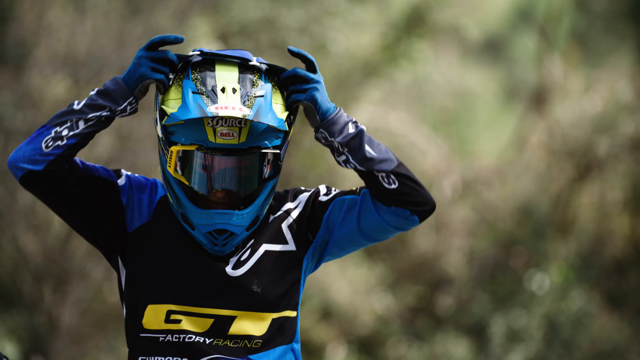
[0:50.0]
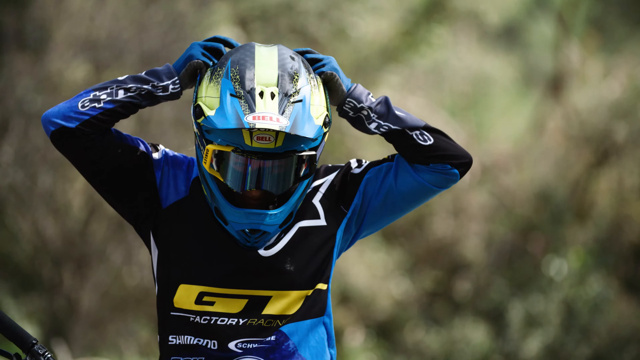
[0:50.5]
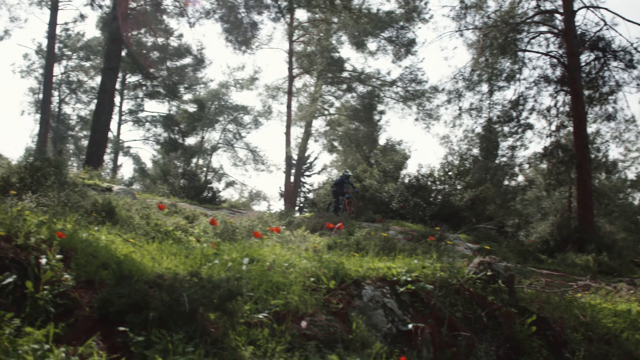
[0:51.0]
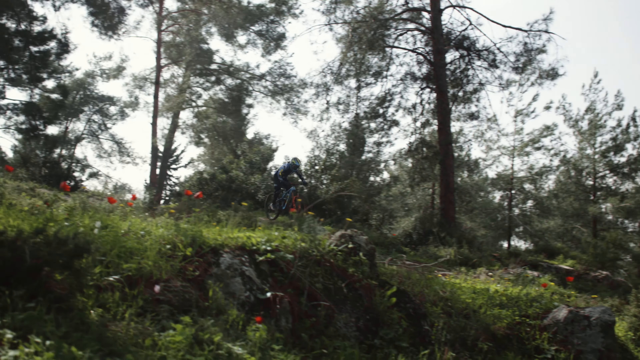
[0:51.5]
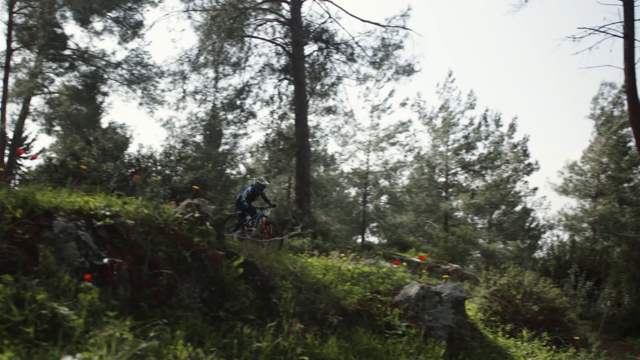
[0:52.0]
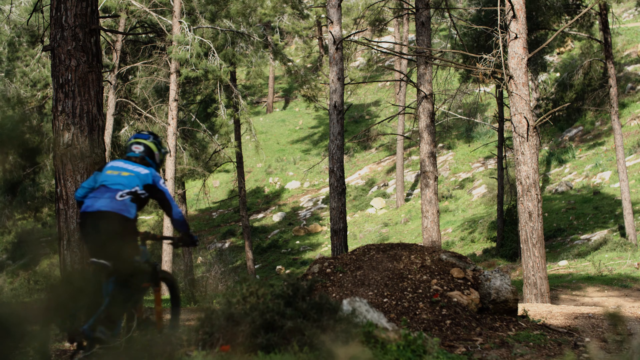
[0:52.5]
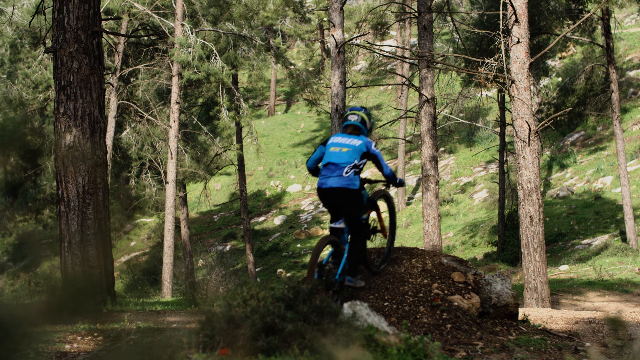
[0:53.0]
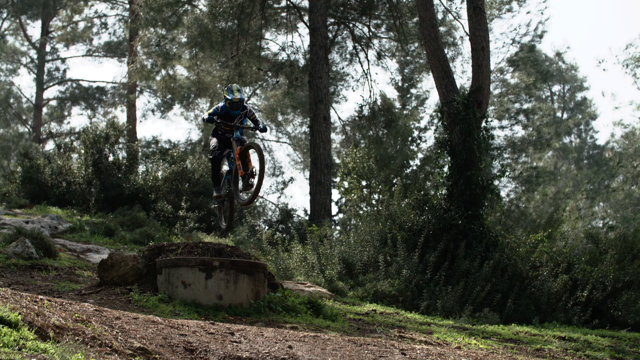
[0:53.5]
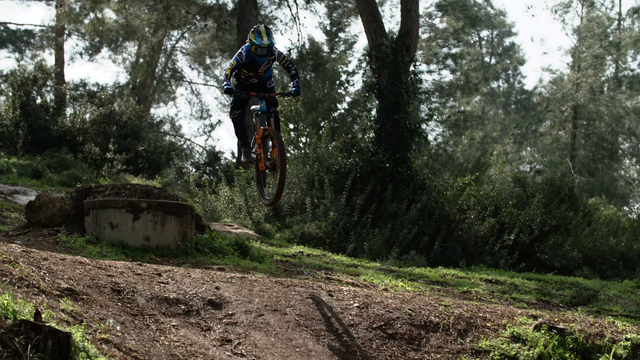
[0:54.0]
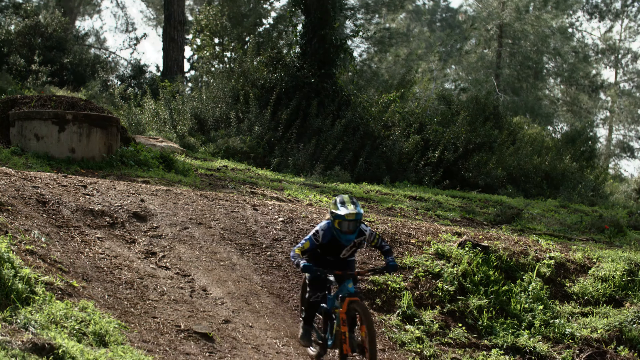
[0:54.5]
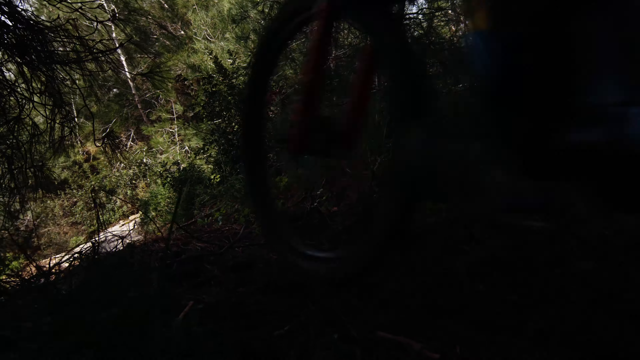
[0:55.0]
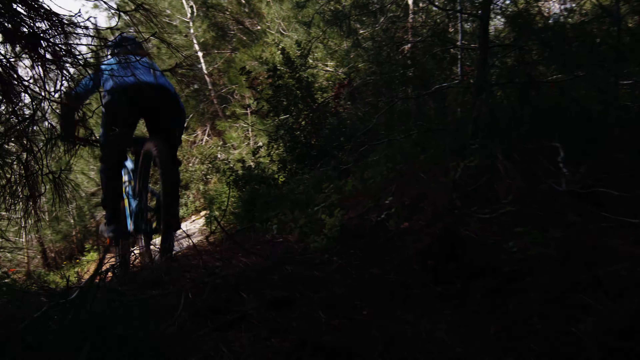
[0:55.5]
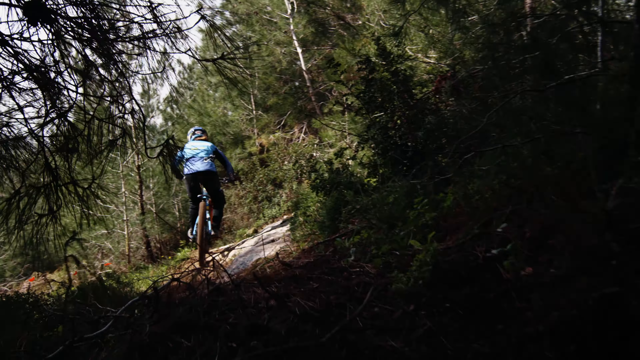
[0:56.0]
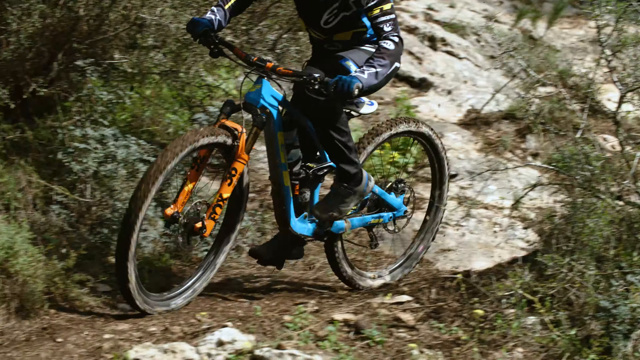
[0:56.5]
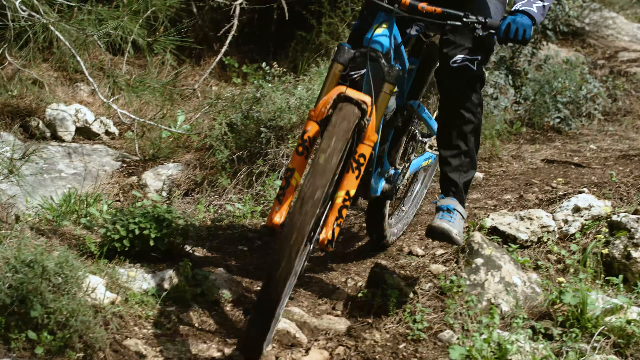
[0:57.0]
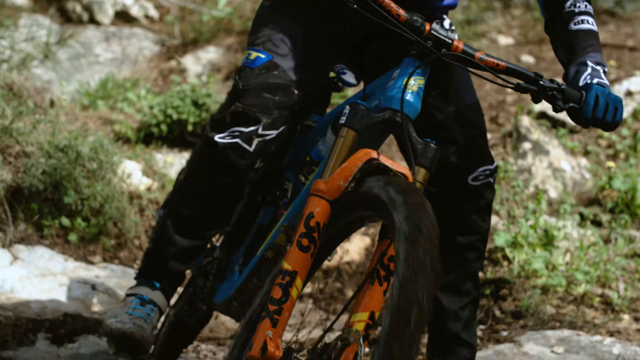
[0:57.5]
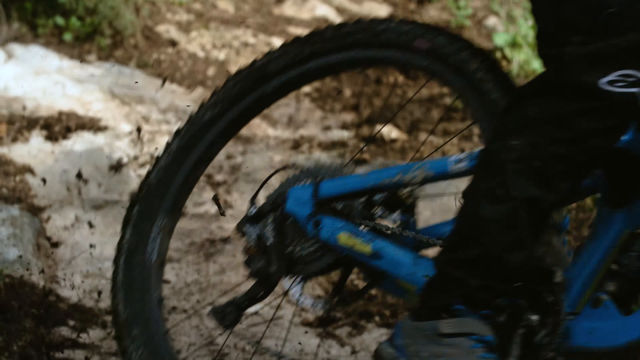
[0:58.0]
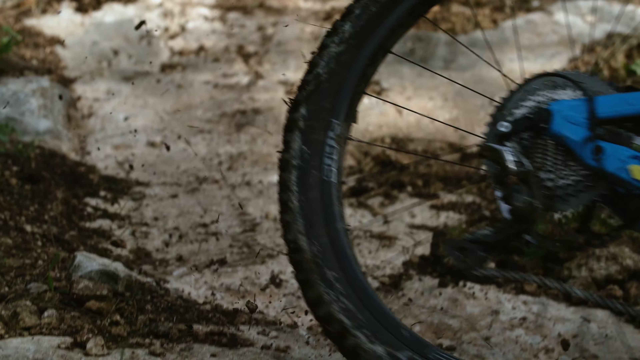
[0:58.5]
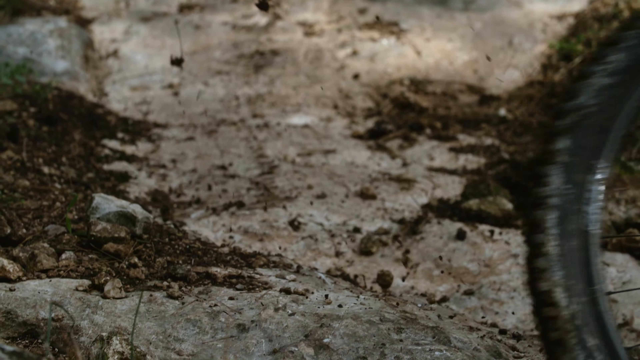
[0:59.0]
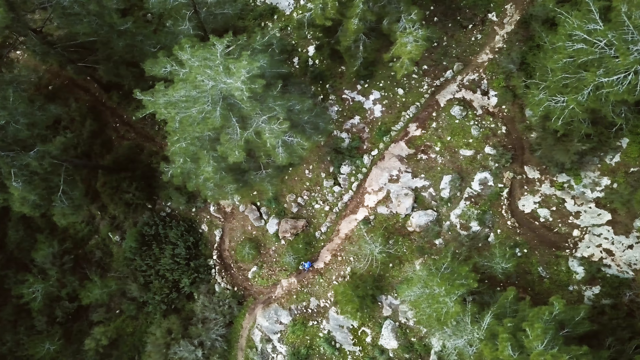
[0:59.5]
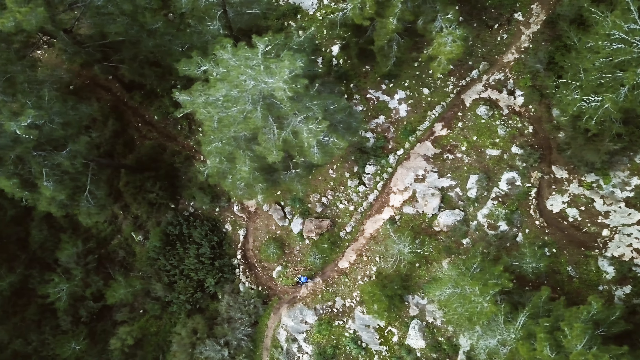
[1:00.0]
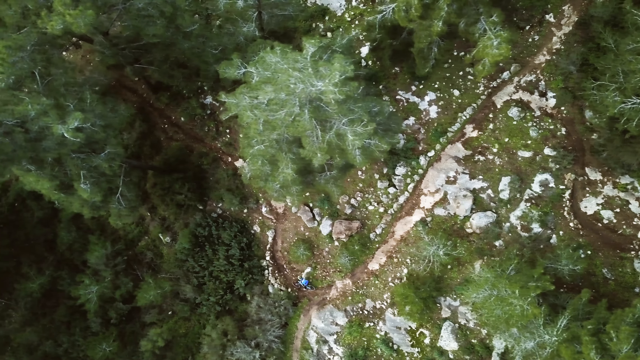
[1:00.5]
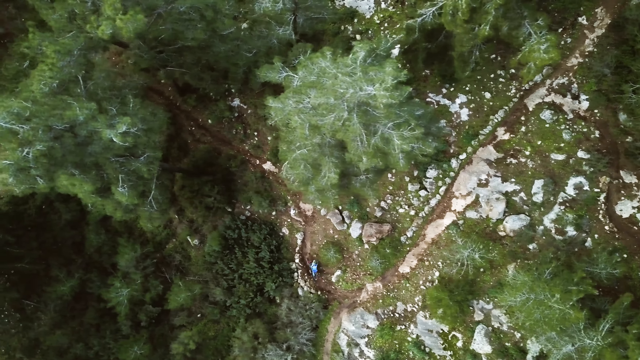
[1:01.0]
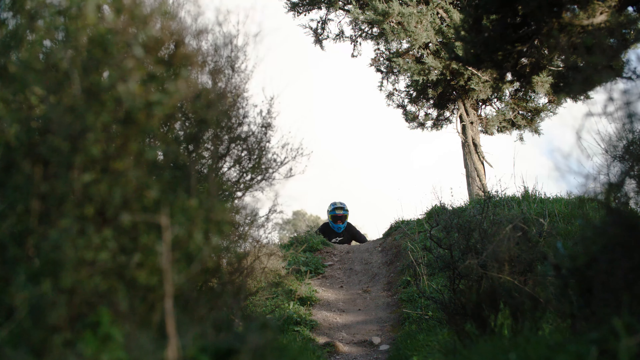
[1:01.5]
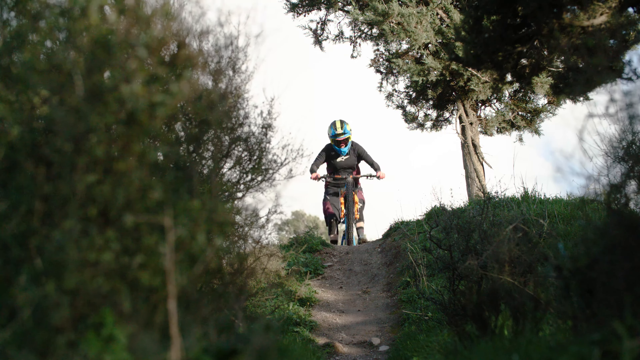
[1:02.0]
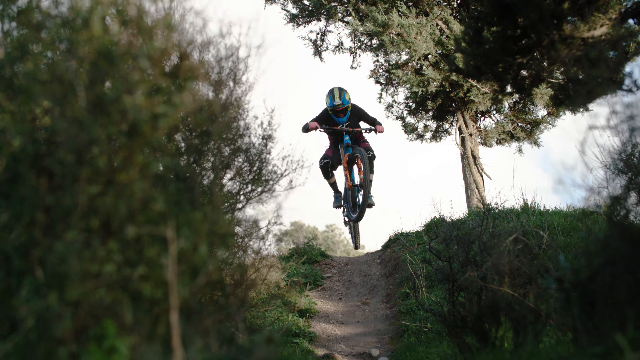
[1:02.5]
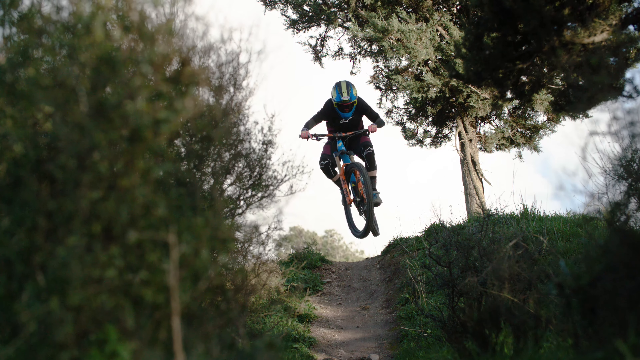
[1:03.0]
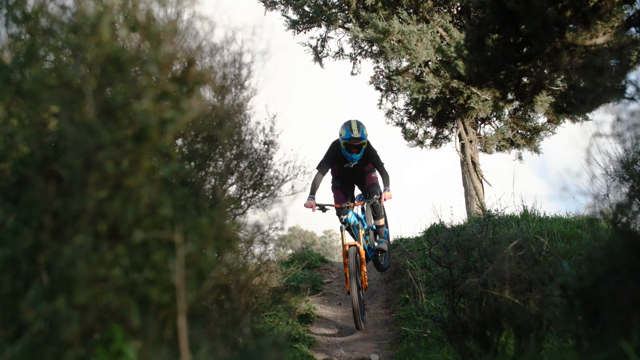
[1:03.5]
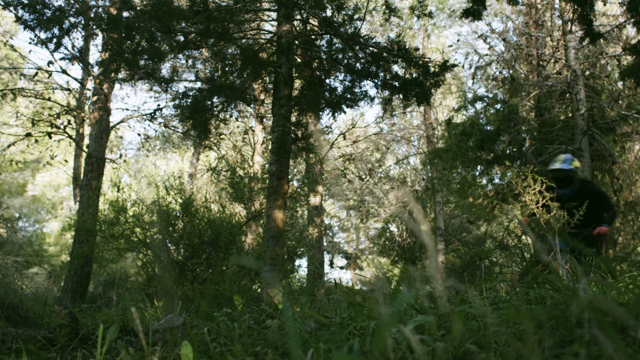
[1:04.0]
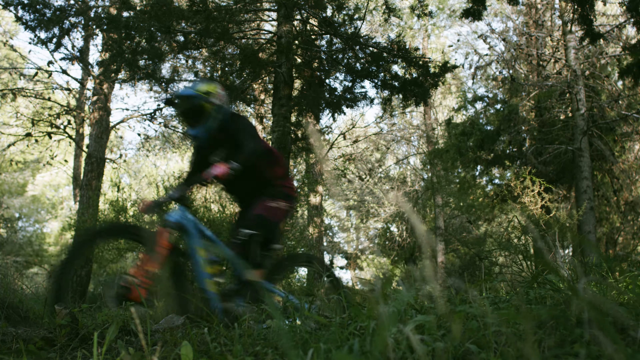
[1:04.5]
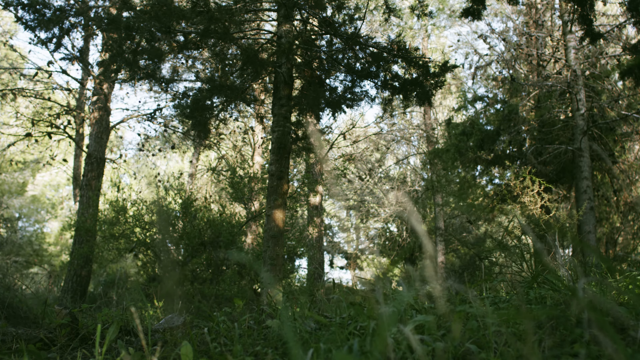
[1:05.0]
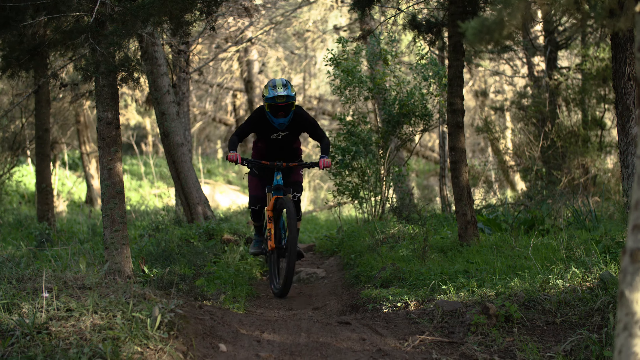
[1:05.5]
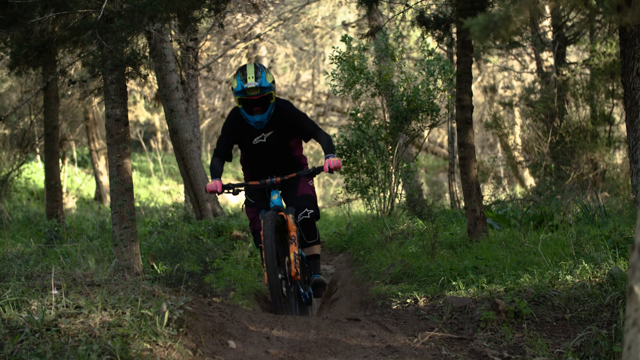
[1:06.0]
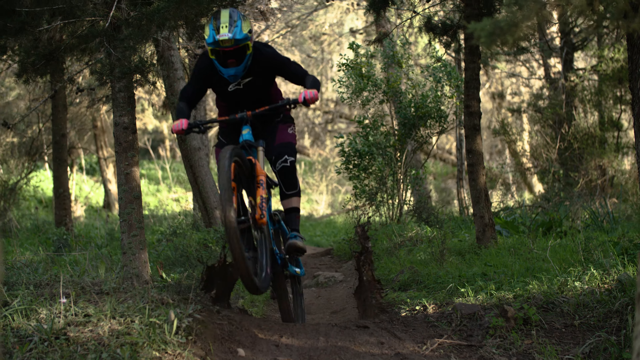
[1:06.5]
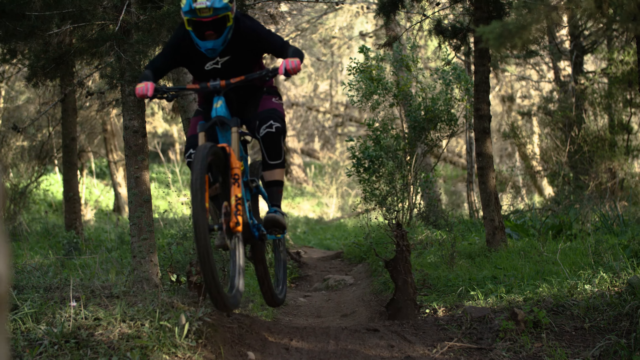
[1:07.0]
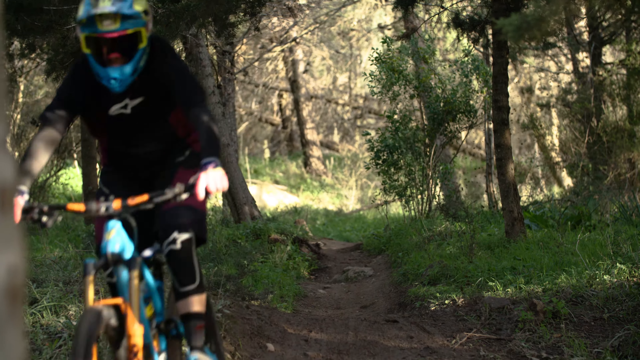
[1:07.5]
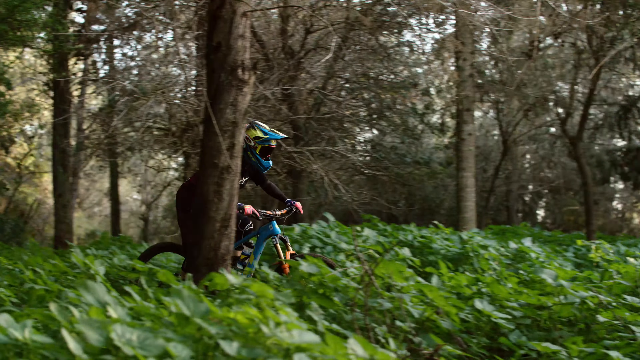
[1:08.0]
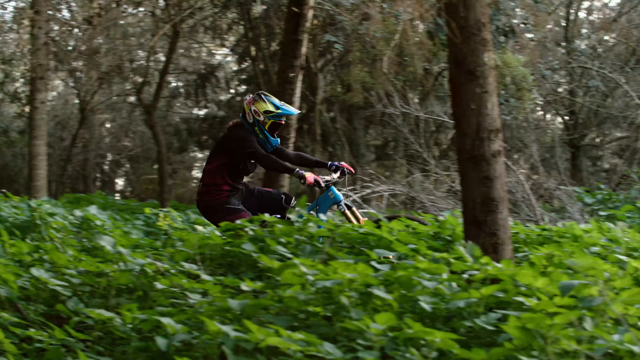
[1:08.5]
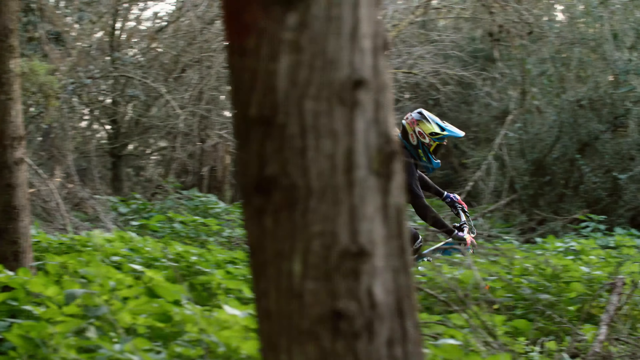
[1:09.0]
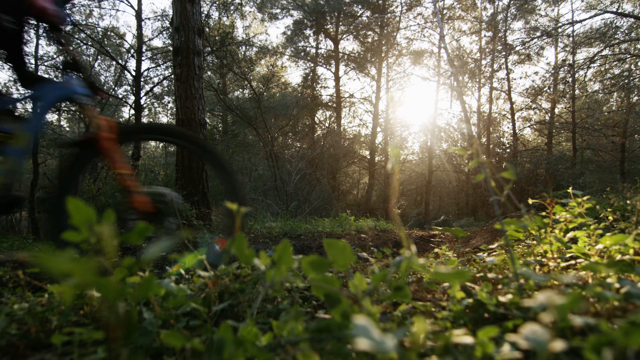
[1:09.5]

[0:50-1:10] A close-up shows a bicyclist from the waist up wearing a helmet with a dark shield, so their identity cannot be seen. Another outdoor view shows someone riding a bike through a grassy area with red flowers in the foreground. All of the scenes are on outdoor trails. At one point someone leaps over a natural ramp, maybe a rocky area, taking off and landing in a jump of at least 10 to 15 feet. Occasional close-ups of the bike show just the feet. The montage continues with views of someone riding outdoors; one is overhead, showing the bike curving down a pathway, and in another the rider jumps again over a small ramp. The rider is apparently the woman, wearing a light blue and yellow helmet, so her face is never really seen. The snippets are each about two seconds long at most. This area is less dusty, with many more dirt paths through the woods. Every time both wheels leave the ground in a jump, the video briefly slows into slow motion.